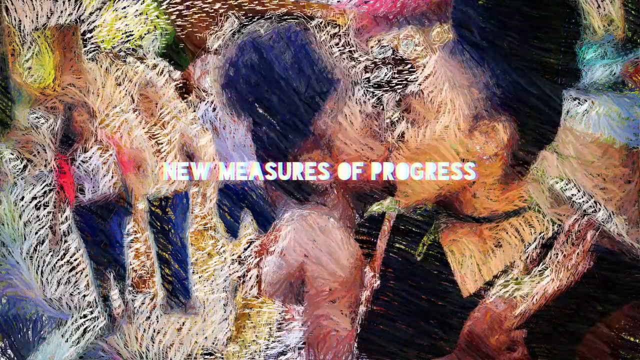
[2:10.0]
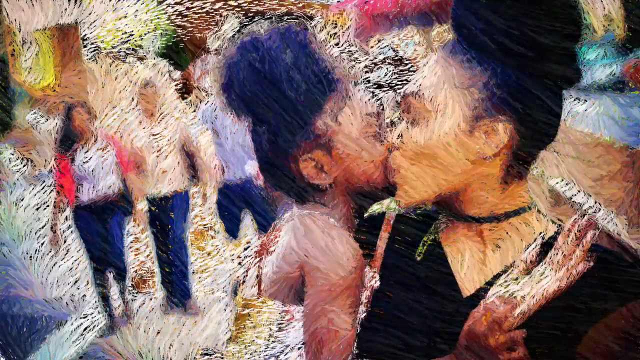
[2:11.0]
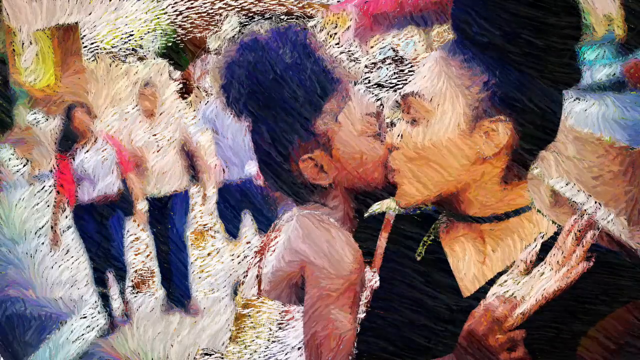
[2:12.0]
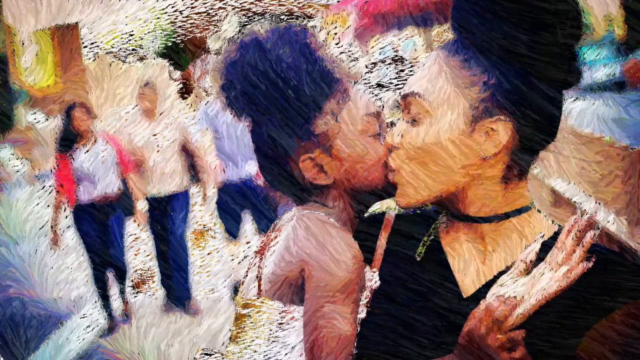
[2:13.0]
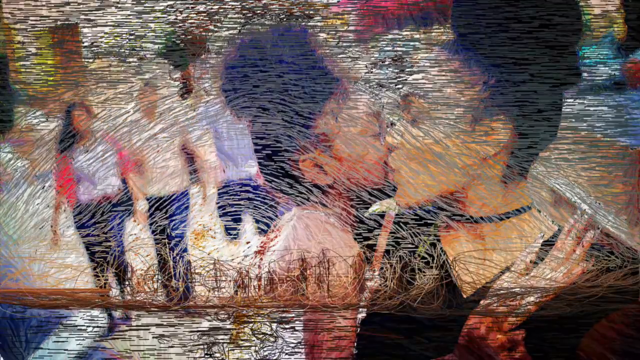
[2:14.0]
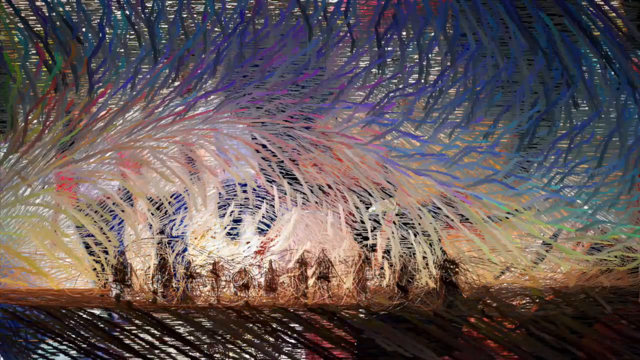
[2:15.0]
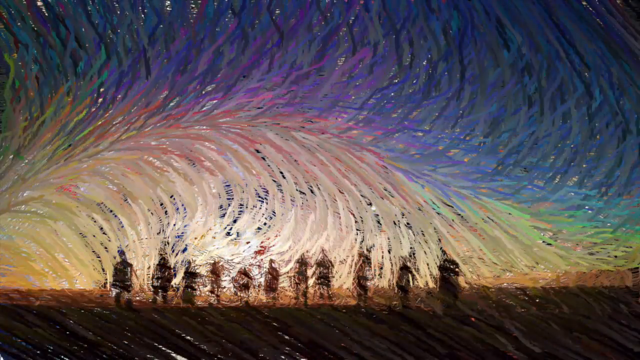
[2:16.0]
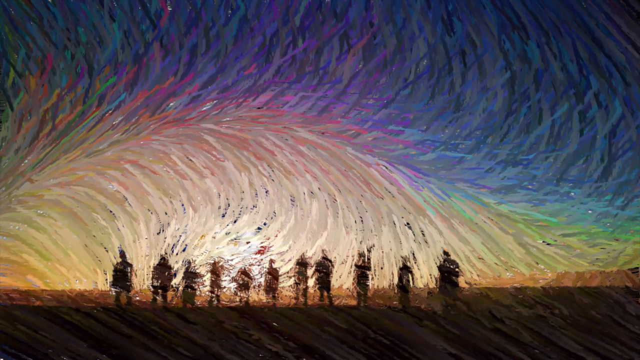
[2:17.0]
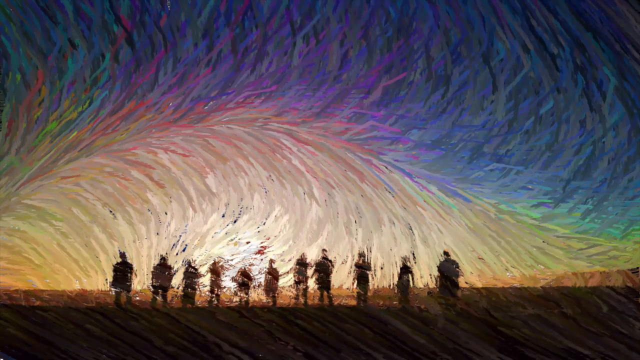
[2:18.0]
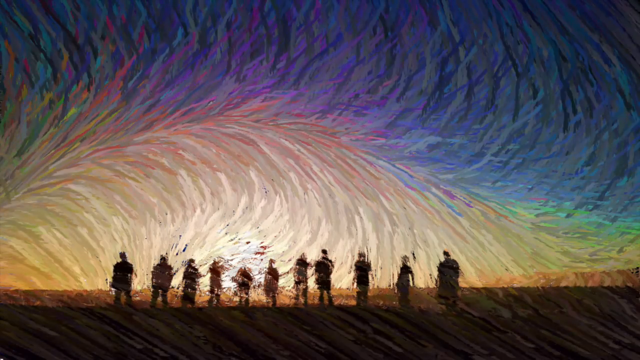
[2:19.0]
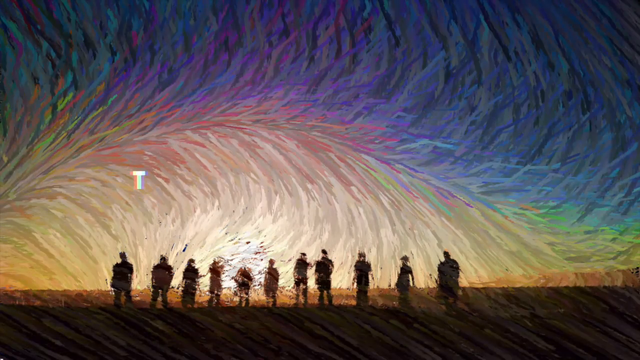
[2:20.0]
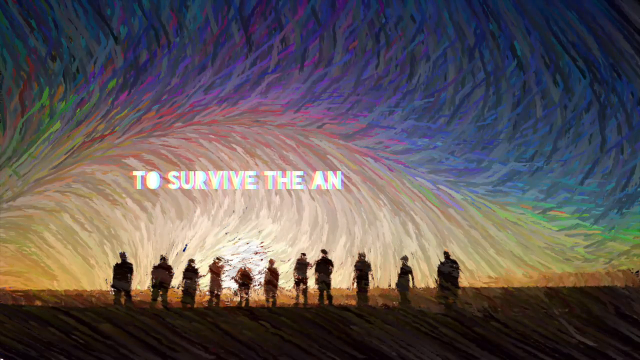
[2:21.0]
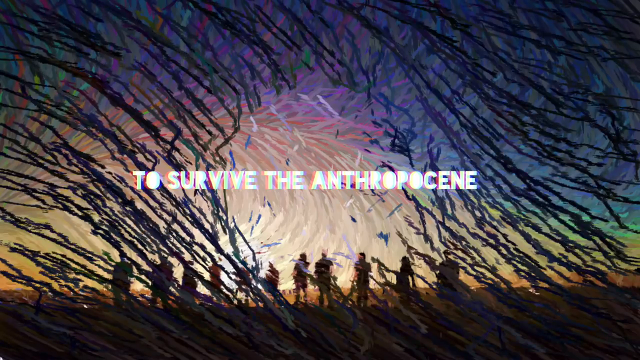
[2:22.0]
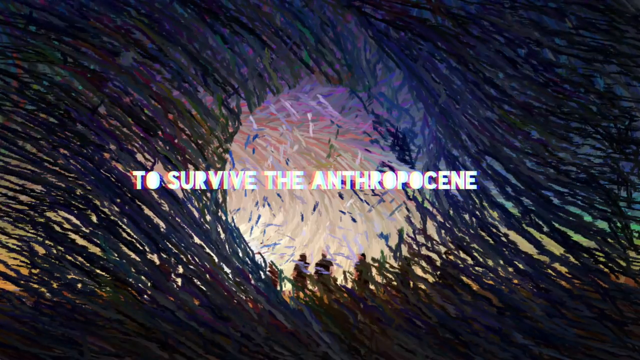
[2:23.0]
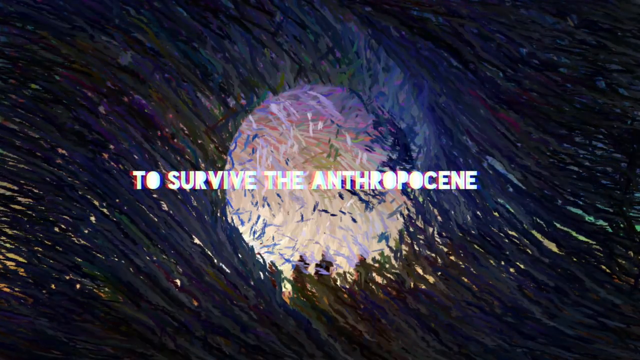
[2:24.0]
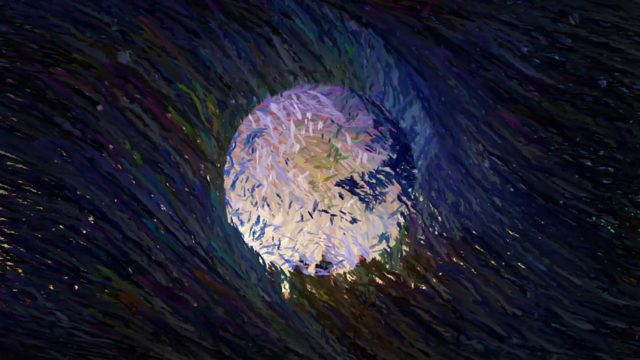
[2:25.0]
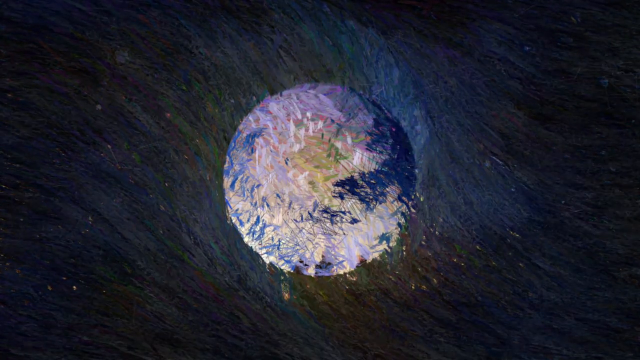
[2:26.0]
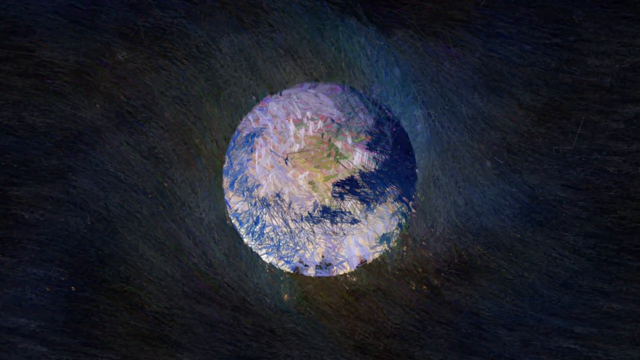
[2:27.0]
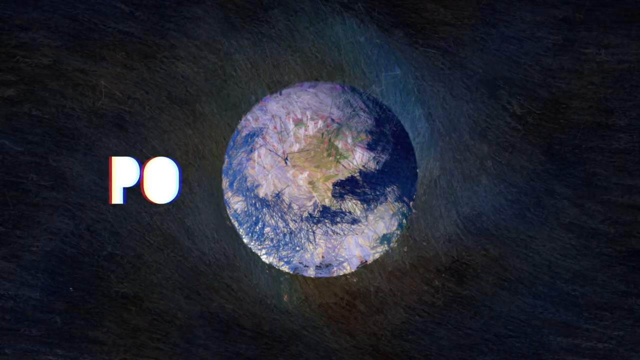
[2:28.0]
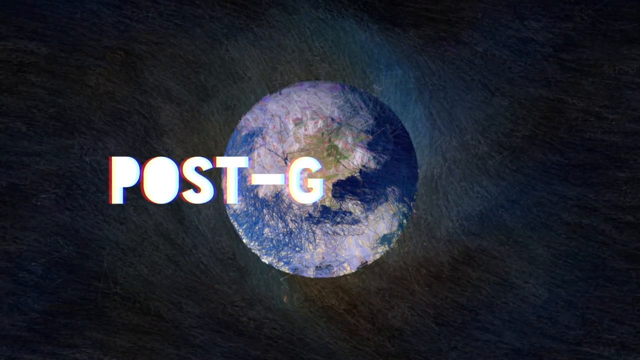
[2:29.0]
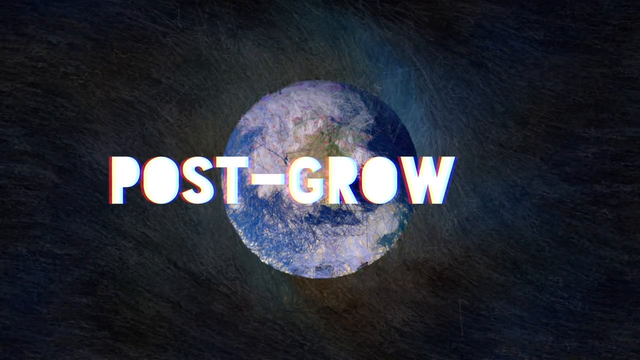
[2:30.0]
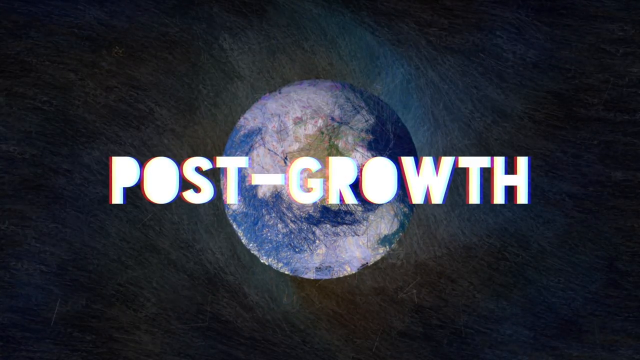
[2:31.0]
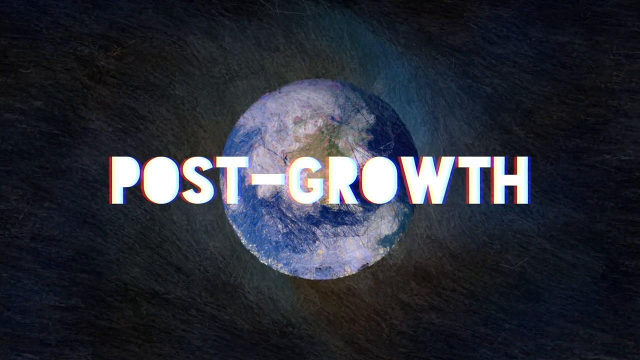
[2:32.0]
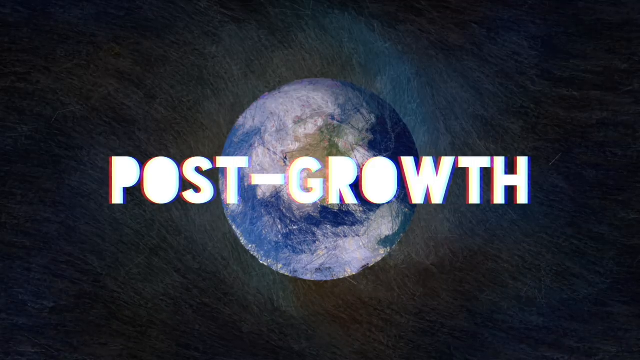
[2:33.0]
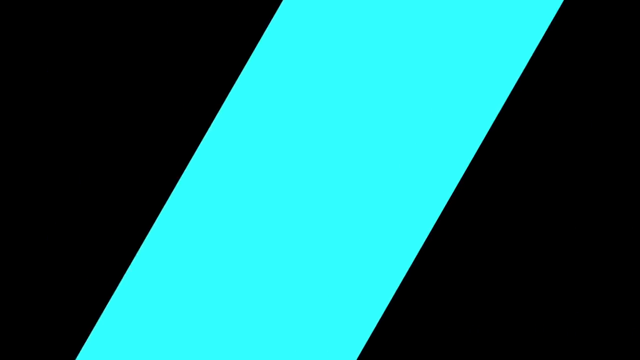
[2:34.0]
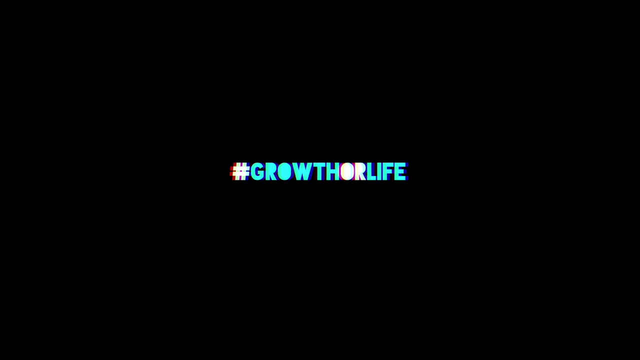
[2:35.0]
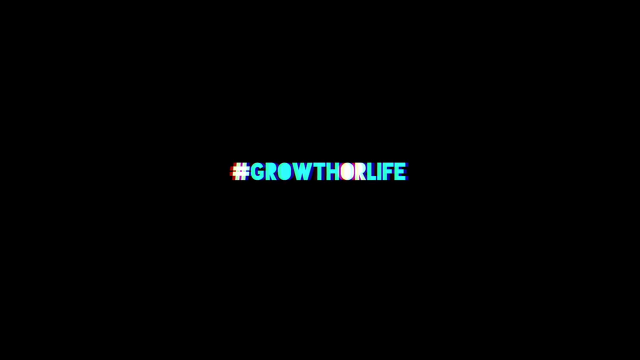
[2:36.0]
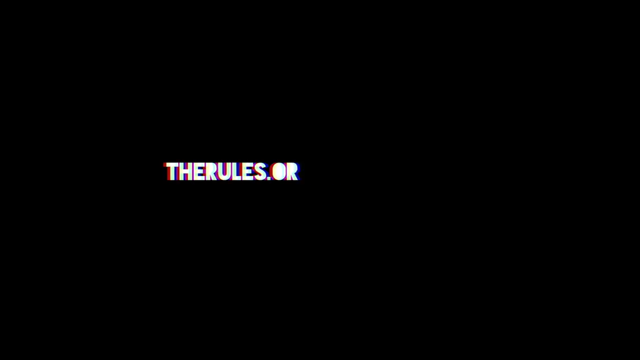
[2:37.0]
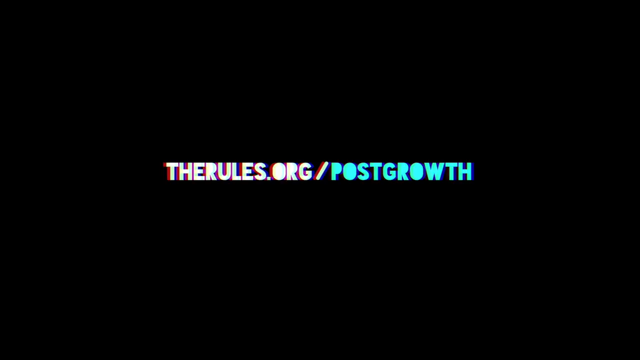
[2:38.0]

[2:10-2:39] On-screen text asks "do you want growth or a change?" and describes capitalism draining life out of the land, out of the factories, out of life. A picture of white and black people appears. Further text refers to the measure of progress and reads "to survive the Anthropocene" and "post-growth", ending with "#growth of life" and "the rules.org/post-growth".